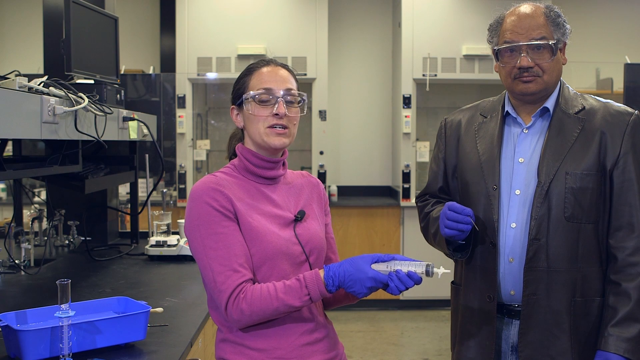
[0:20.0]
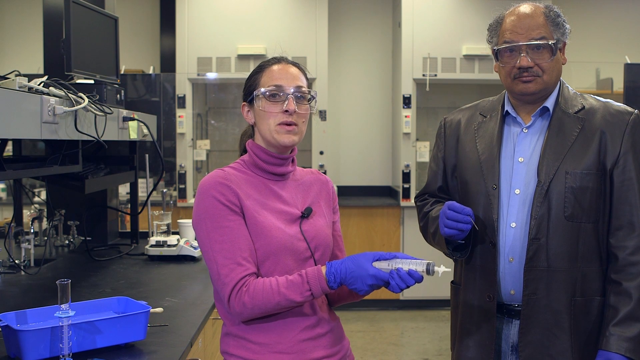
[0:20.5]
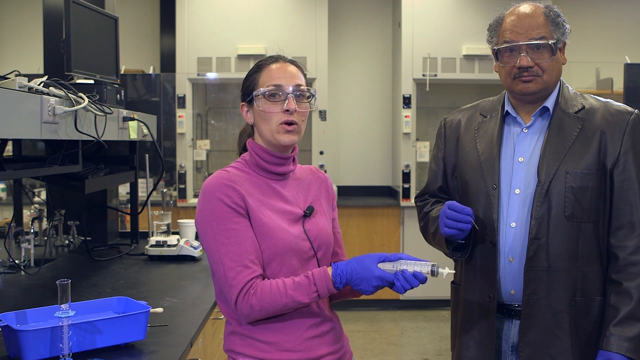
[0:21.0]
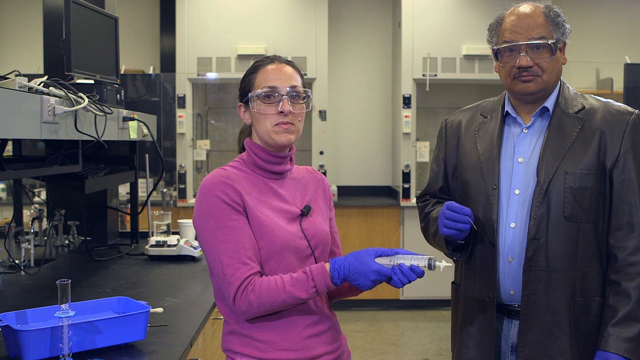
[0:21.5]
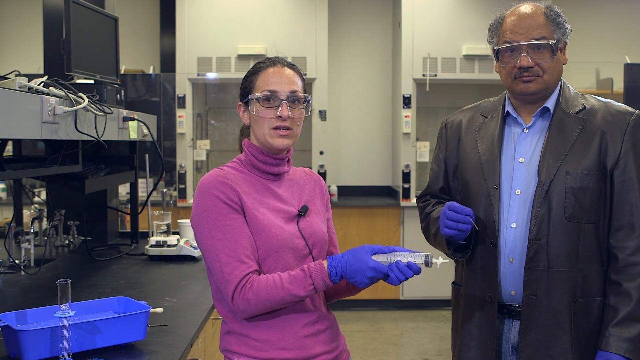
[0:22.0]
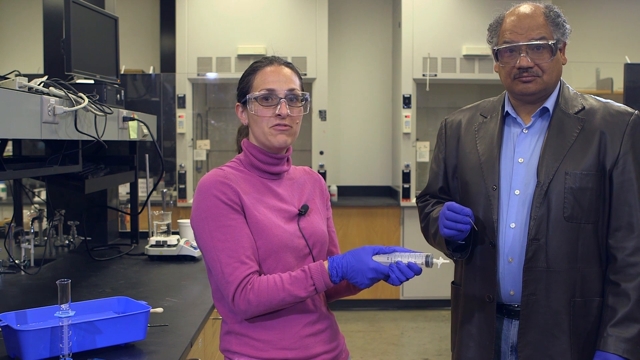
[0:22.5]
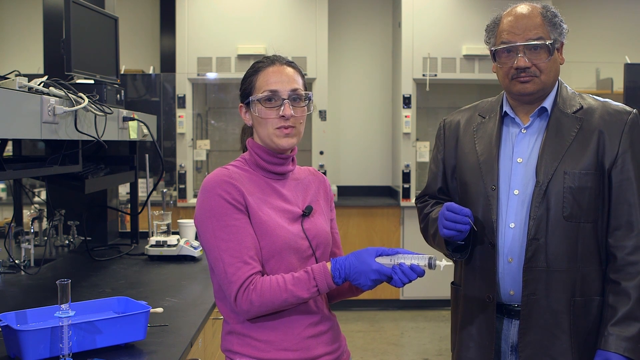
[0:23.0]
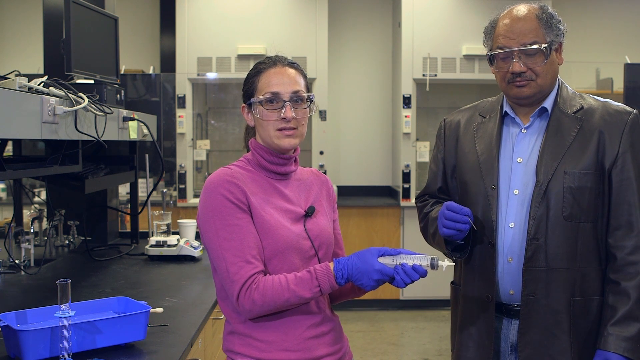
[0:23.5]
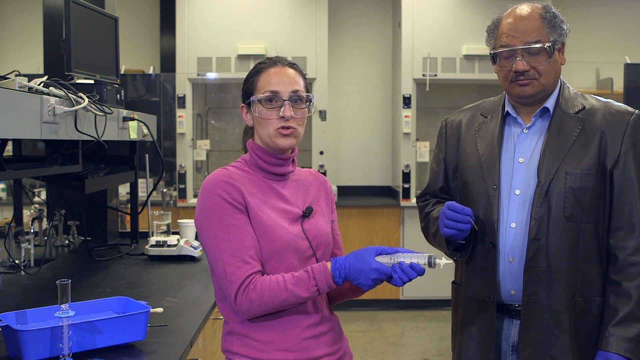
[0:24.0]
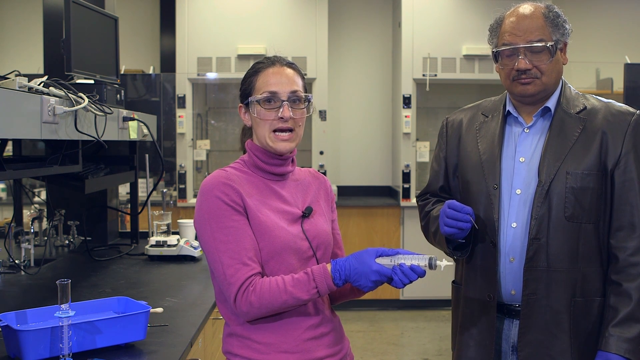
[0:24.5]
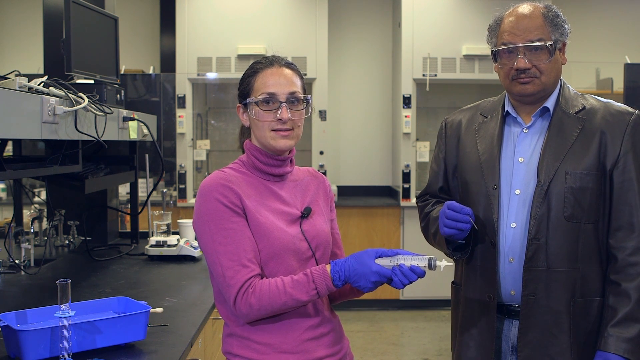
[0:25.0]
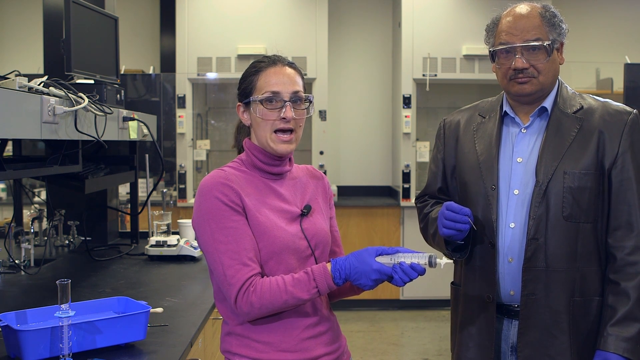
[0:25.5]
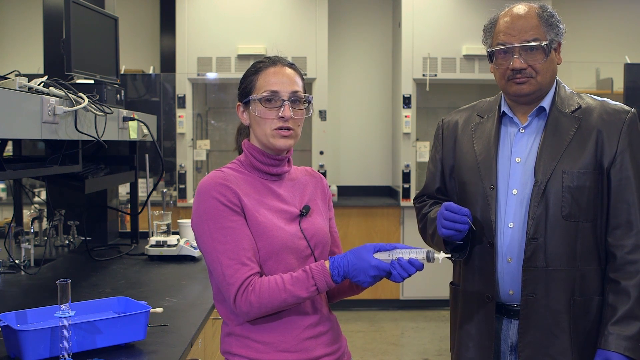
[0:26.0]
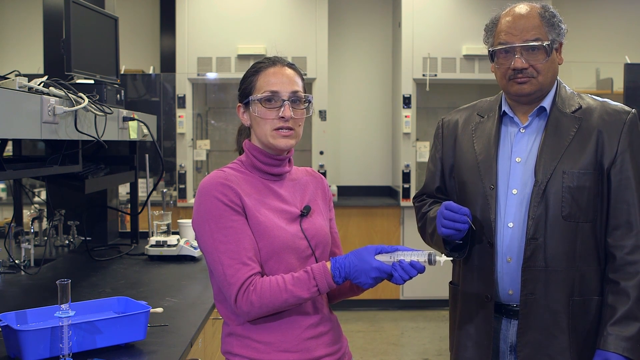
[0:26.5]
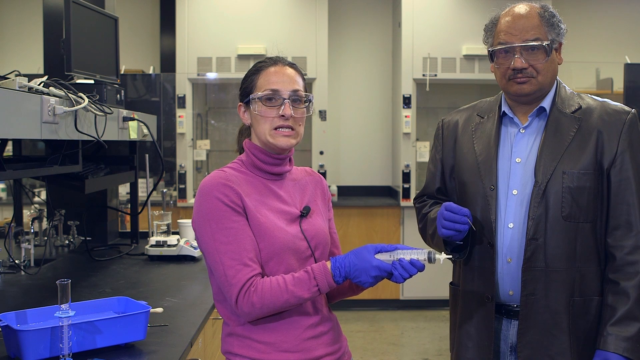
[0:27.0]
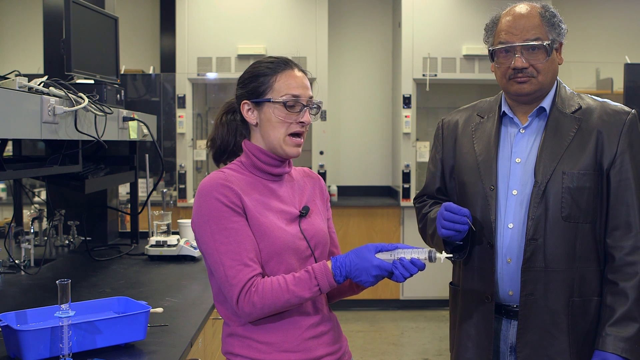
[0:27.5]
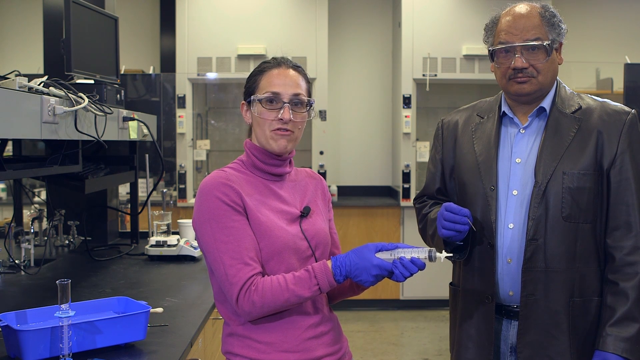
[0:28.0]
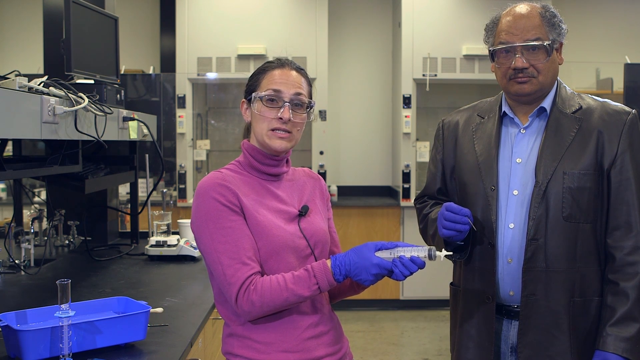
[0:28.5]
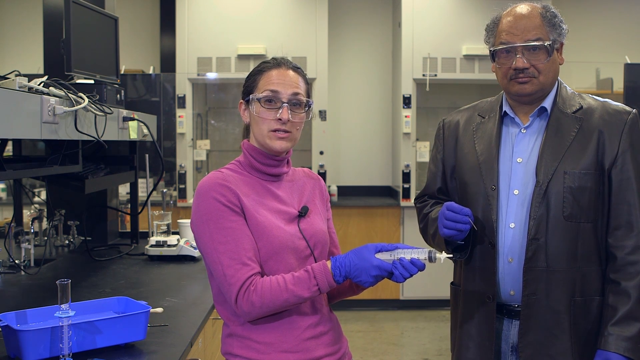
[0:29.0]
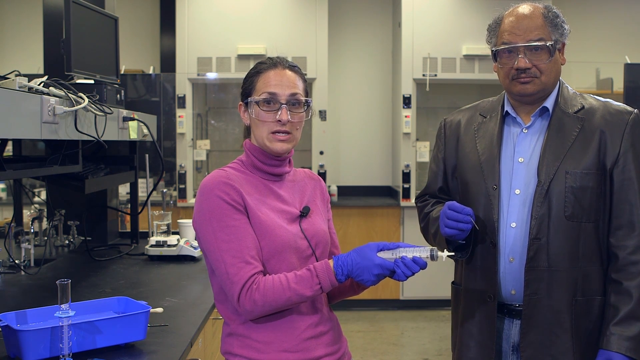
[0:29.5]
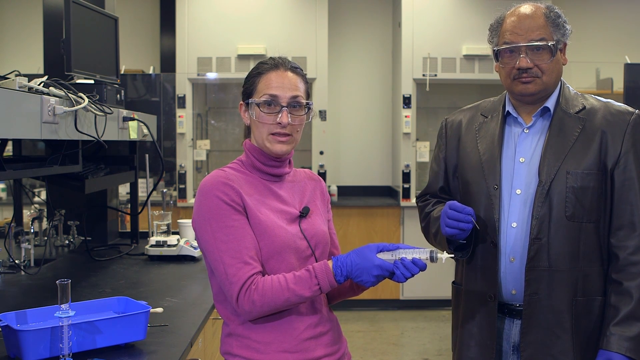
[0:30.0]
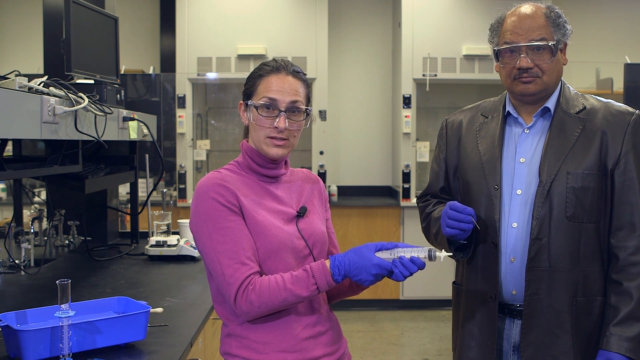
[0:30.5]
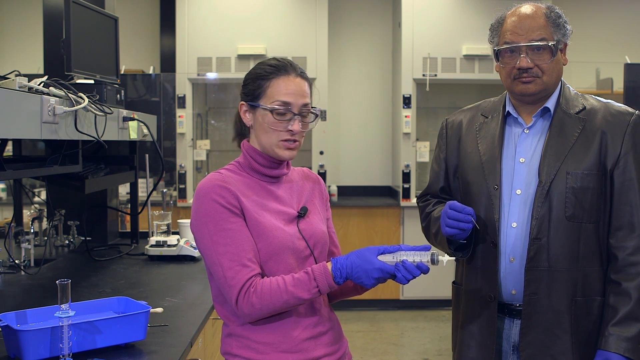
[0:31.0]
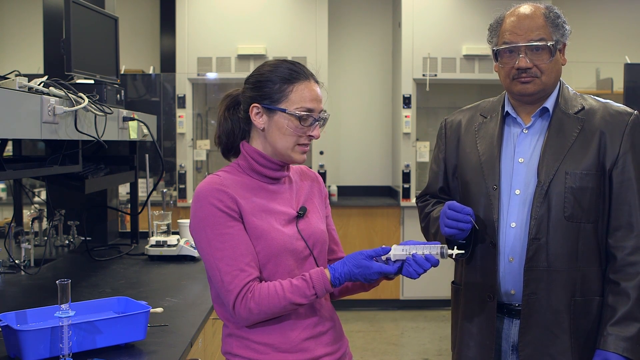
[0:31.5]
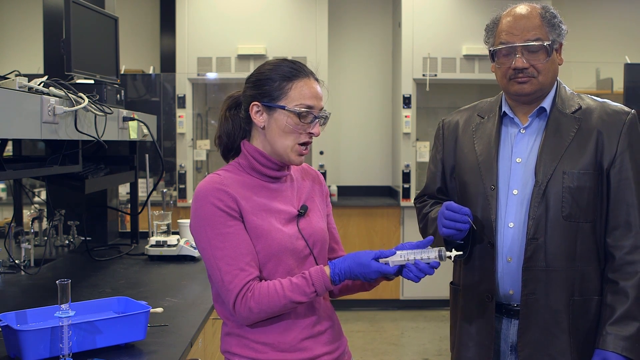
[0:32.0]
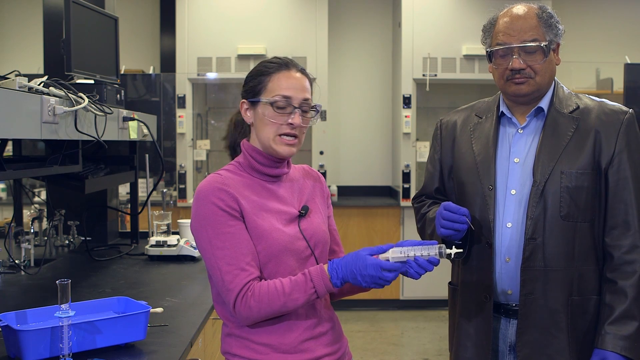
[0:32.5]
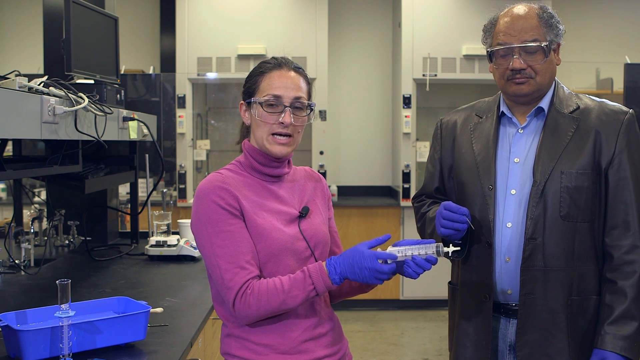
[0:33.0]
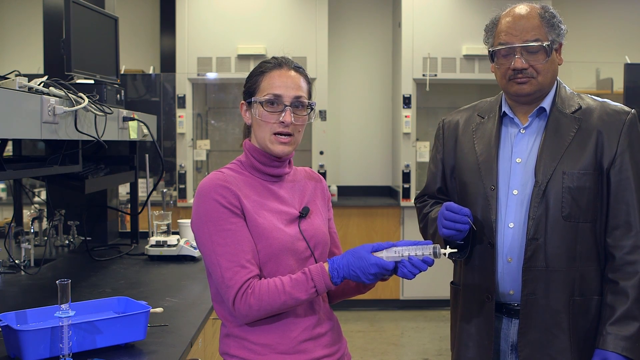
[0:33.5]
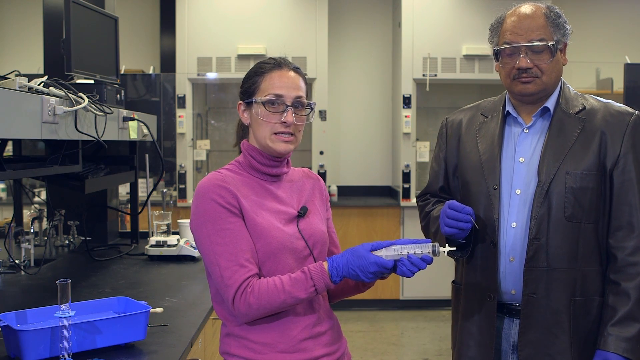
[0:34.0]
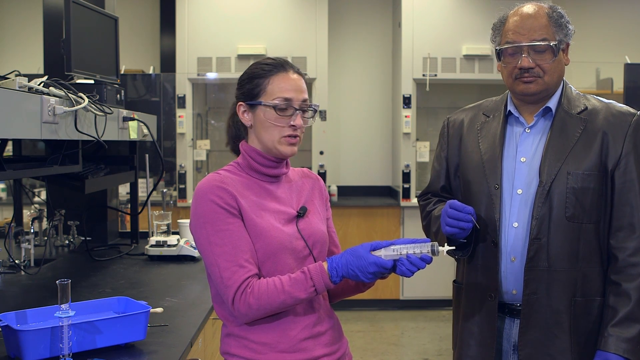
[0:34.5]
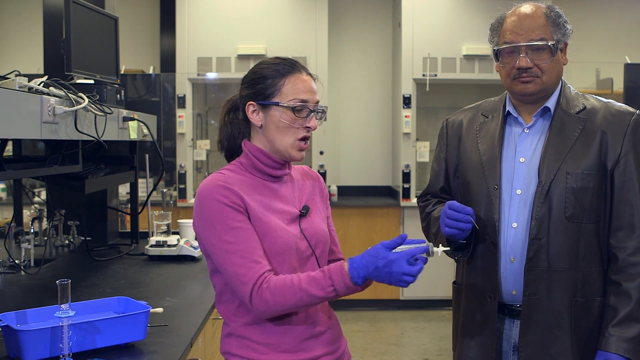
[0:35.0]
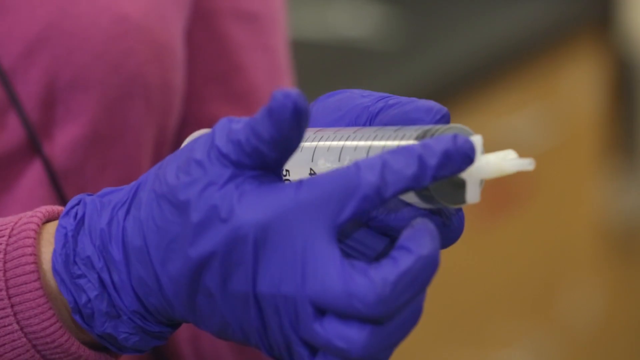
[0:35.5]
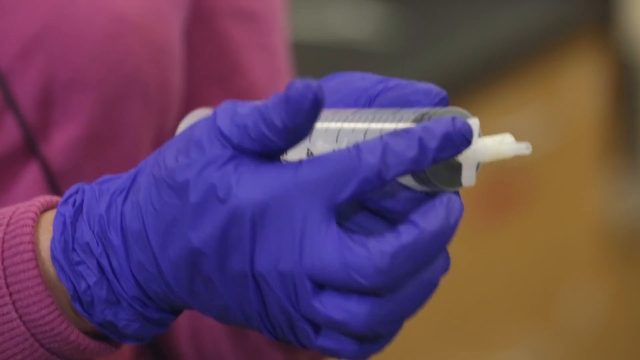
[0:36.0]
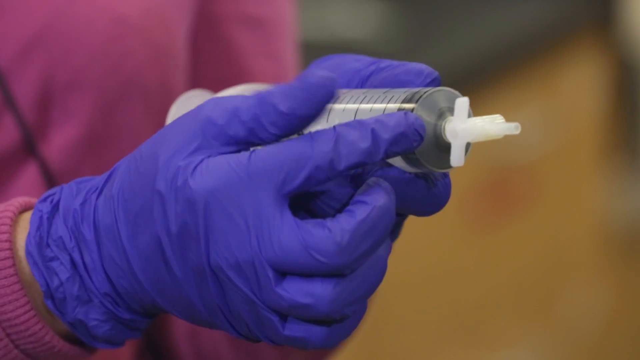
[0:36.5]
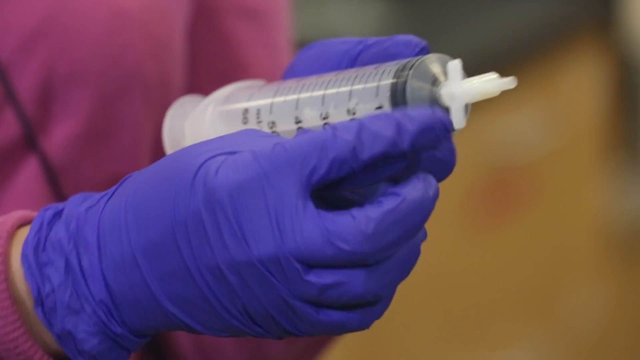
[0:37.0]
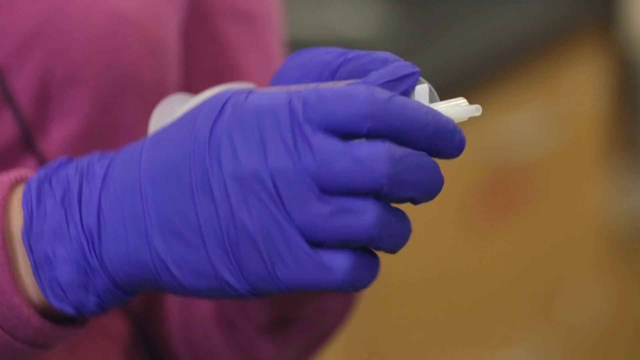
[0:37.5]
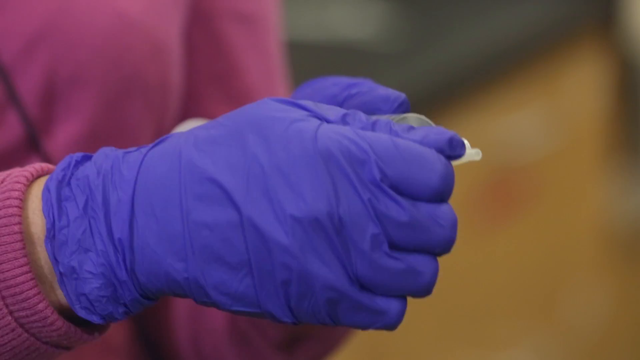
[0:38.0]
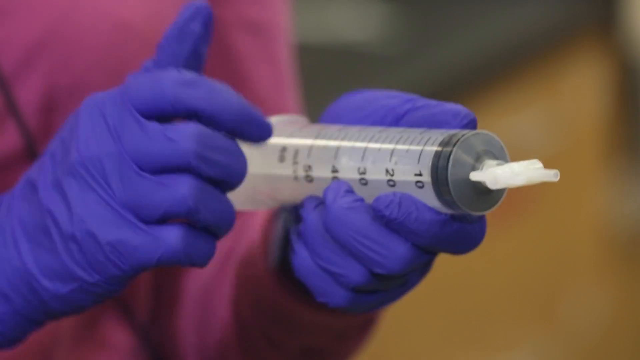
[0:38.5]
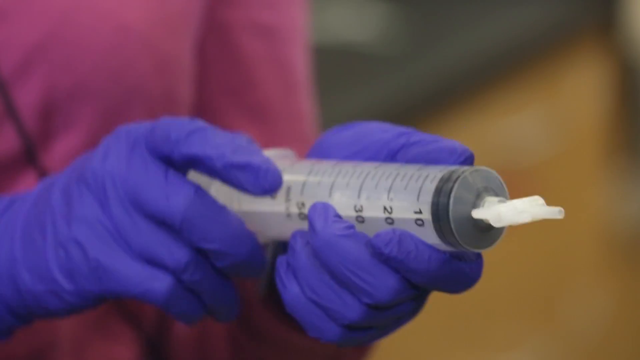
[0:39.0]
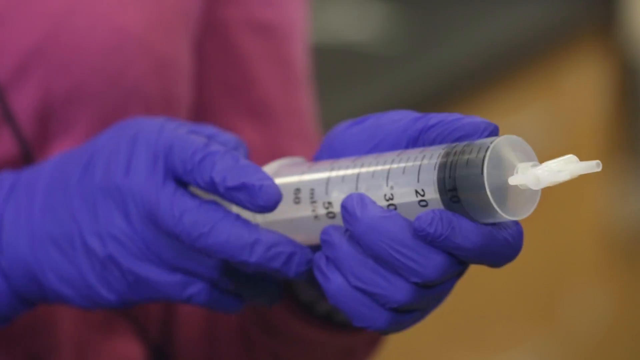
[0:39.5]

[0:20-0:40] The man and the woman appear to be in a laboratory. The woman wears a sleeved pink jacket with a turtleneck, safety glasses, and blue disposable gloves, with her hair pulled back into a low ponytail, and she holds a syringe. The man, who is African-American, wears a blue button-down shirt and a dark suit jacket, safety glasses at the top of his head, and disposable blue gloves. Behind them are laboratory equipment, a desk to the left, a doorway that looks like it is set into the wall, and multiple types of equipment. The woman talks to the camera while holding the syringe in her left hand, using her right hand to show different areas on it. At the very end she pulls the plunger back, and the video zooms in on her hands.